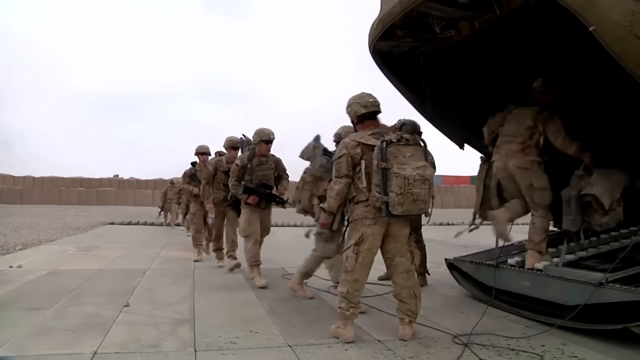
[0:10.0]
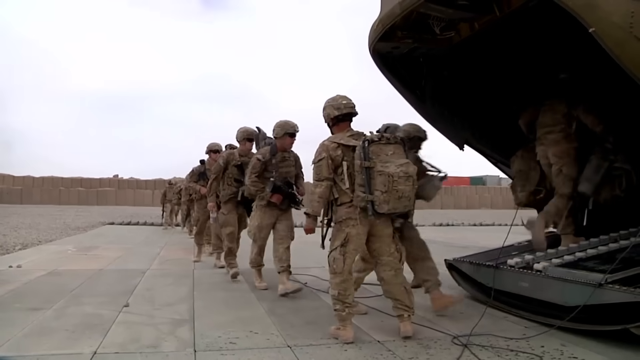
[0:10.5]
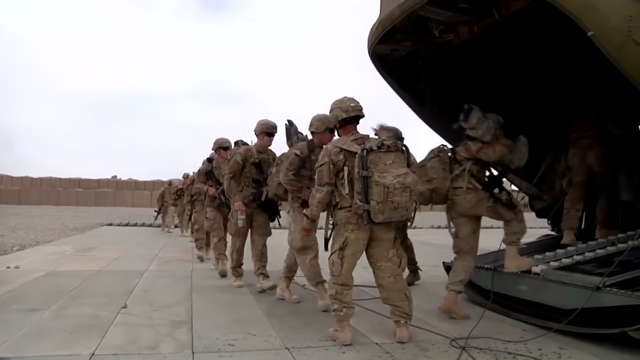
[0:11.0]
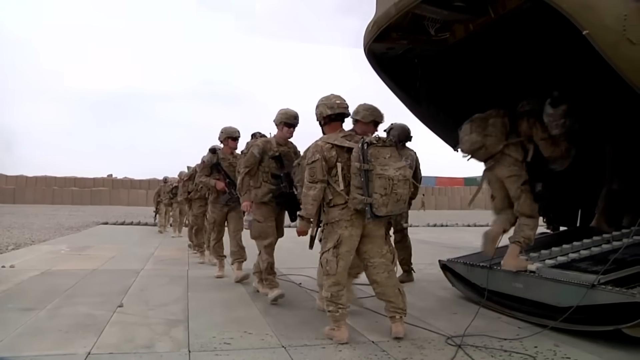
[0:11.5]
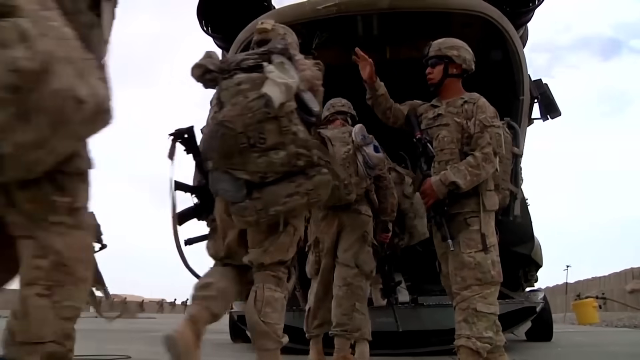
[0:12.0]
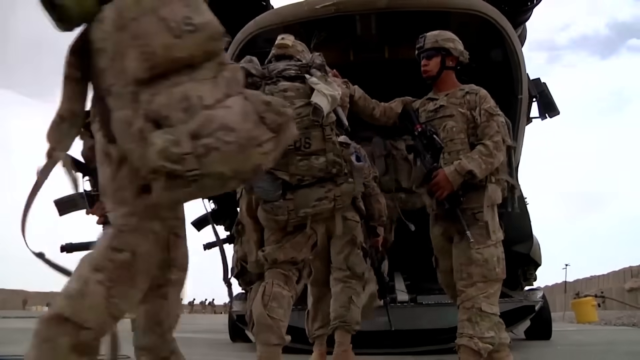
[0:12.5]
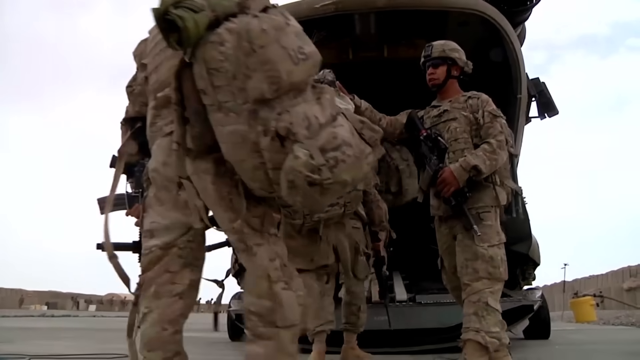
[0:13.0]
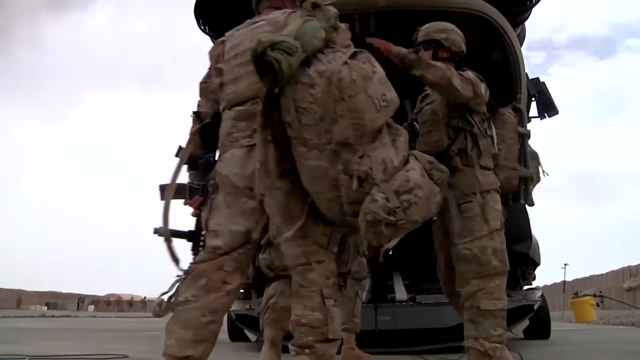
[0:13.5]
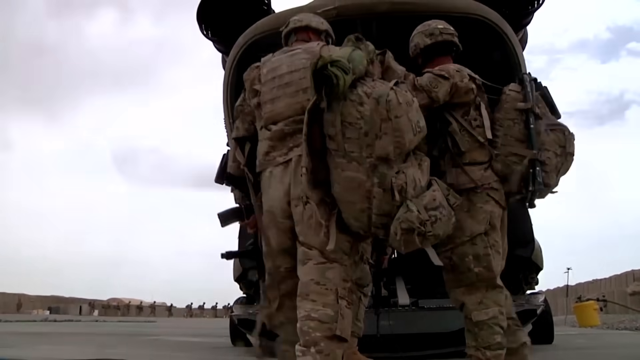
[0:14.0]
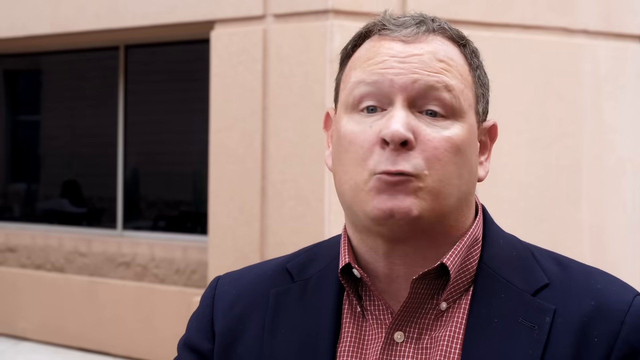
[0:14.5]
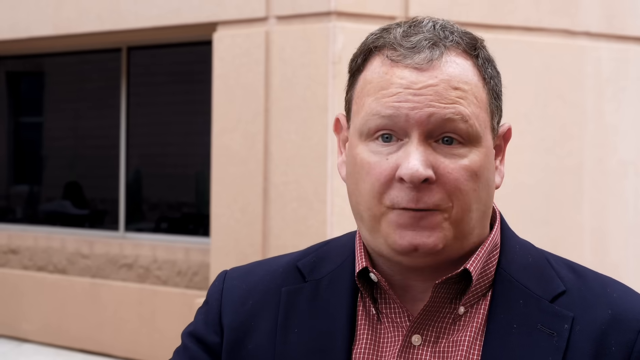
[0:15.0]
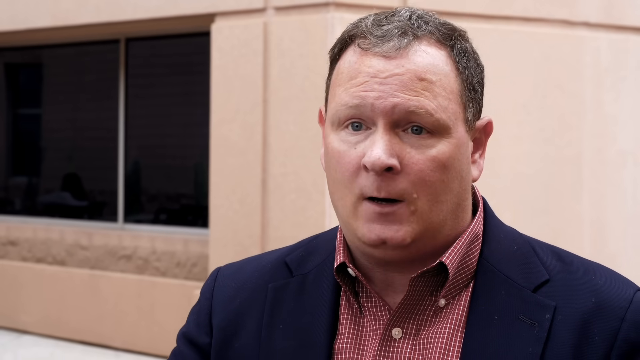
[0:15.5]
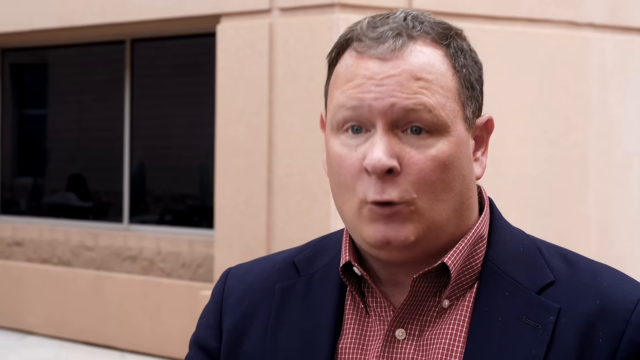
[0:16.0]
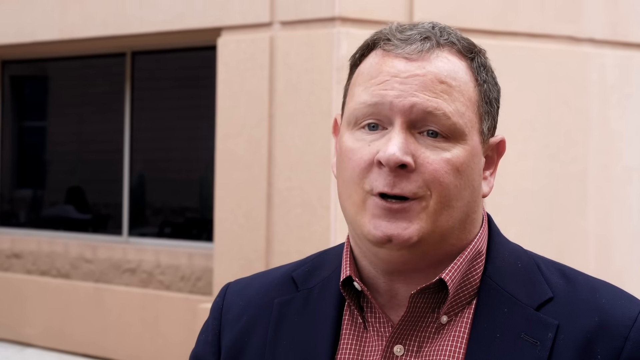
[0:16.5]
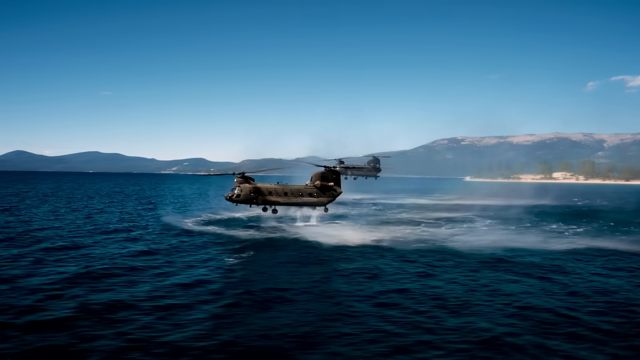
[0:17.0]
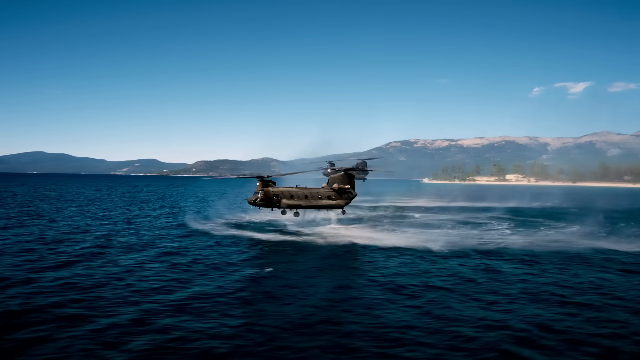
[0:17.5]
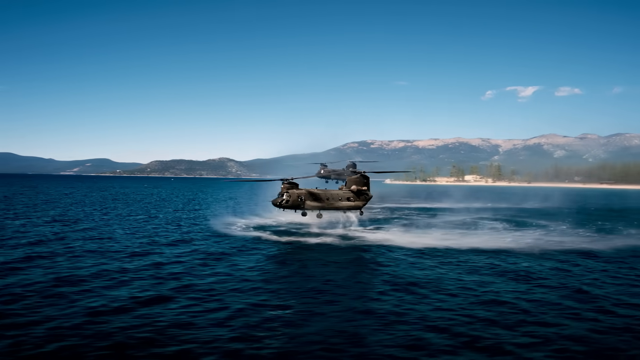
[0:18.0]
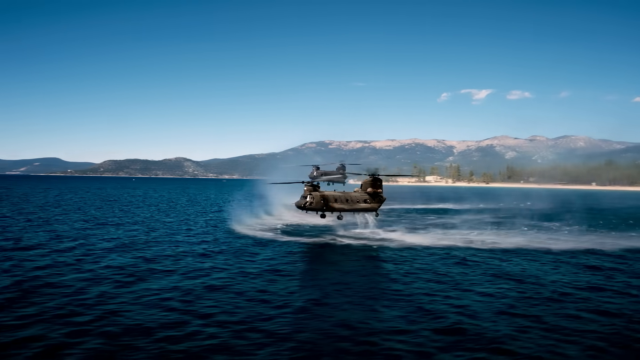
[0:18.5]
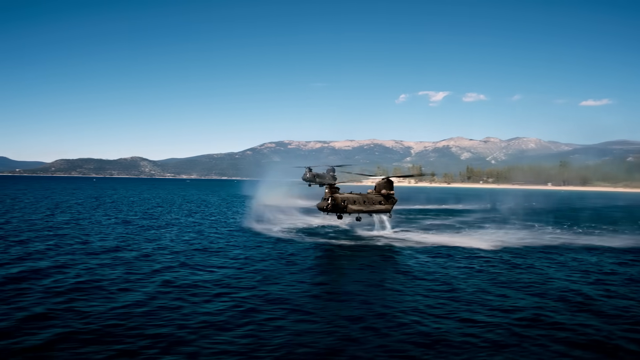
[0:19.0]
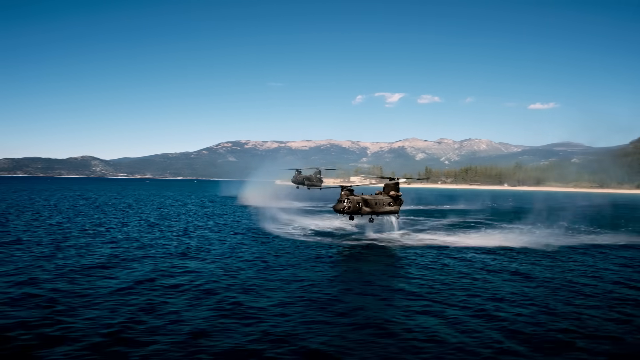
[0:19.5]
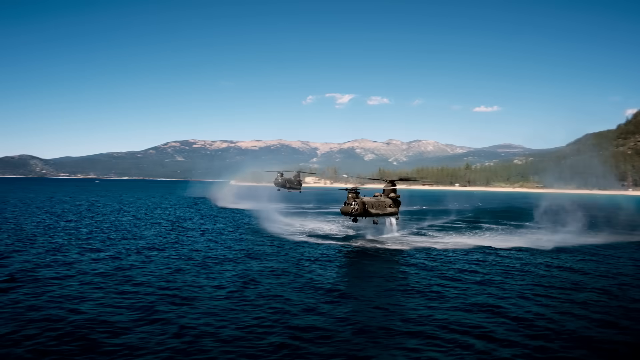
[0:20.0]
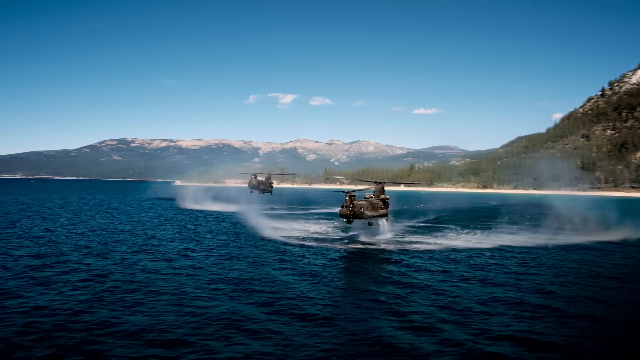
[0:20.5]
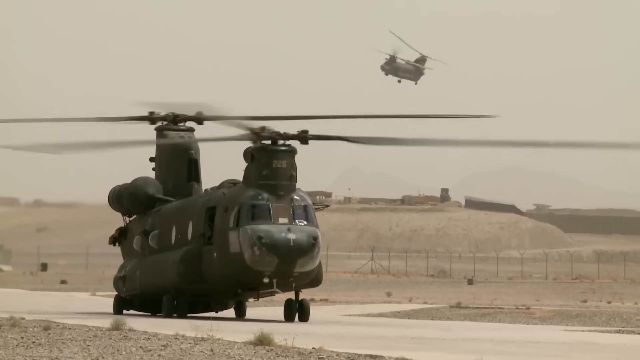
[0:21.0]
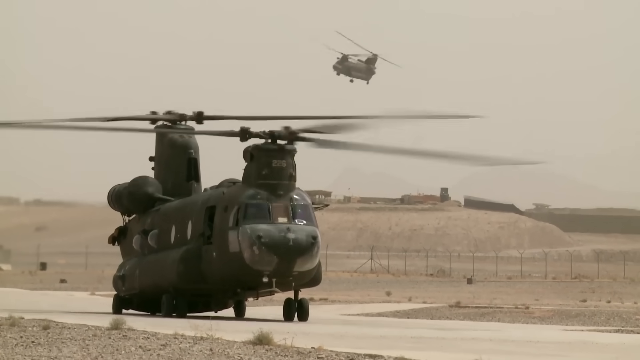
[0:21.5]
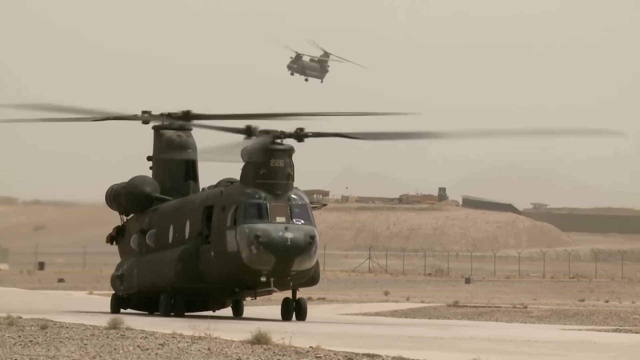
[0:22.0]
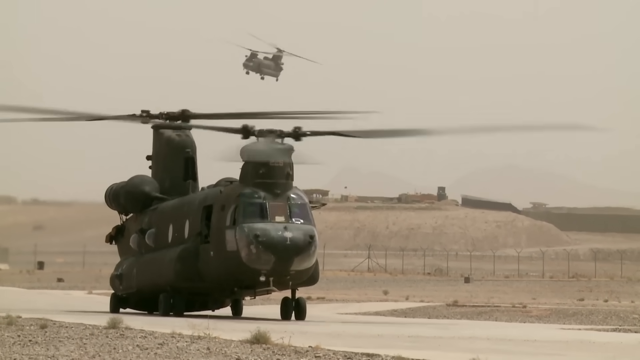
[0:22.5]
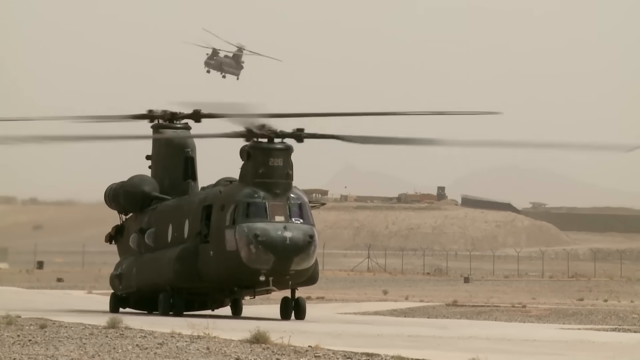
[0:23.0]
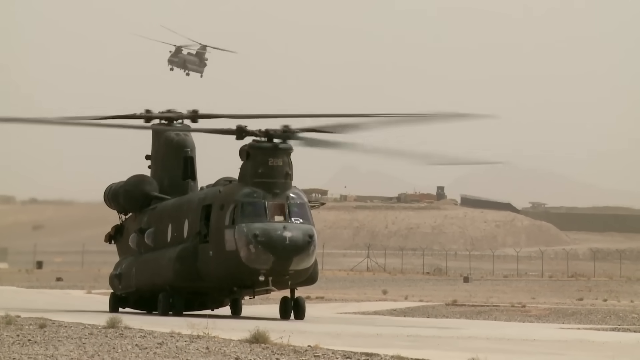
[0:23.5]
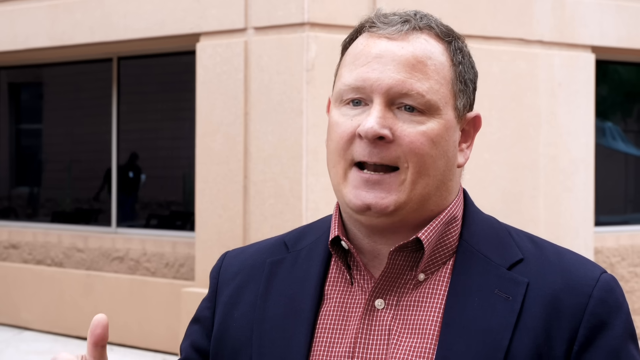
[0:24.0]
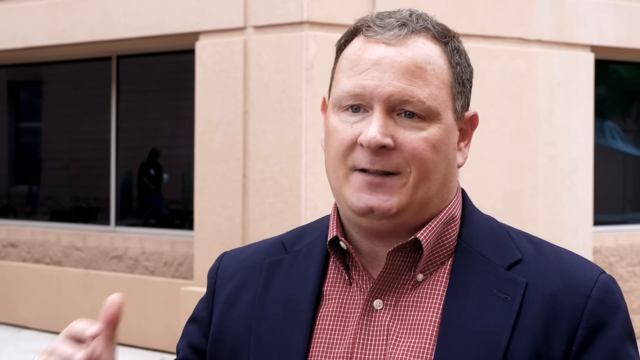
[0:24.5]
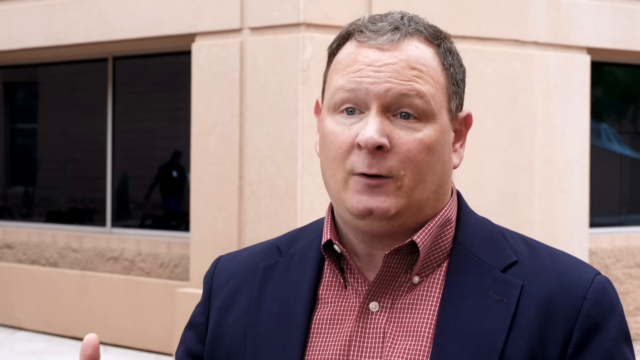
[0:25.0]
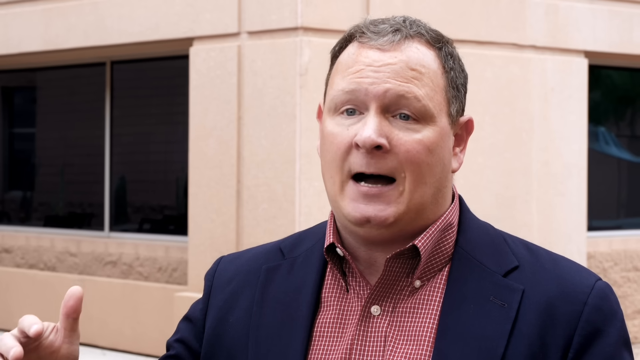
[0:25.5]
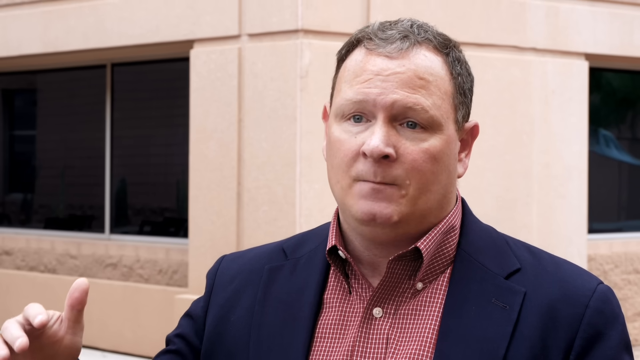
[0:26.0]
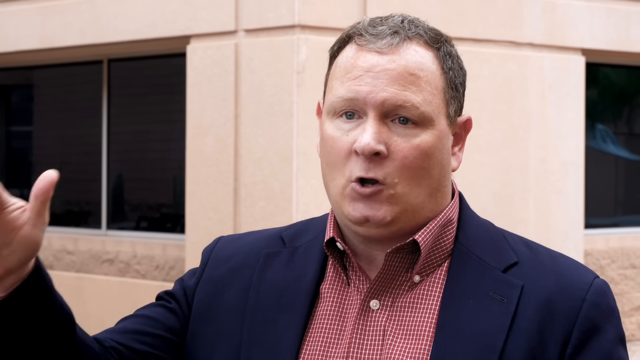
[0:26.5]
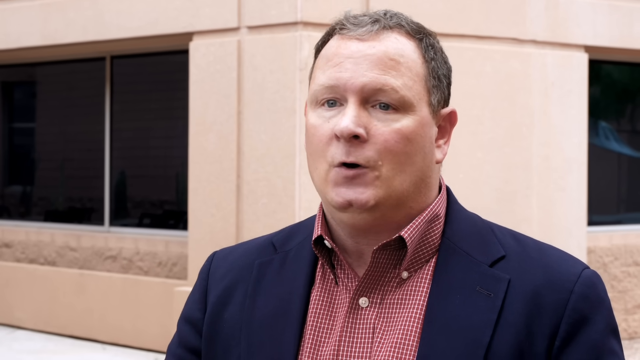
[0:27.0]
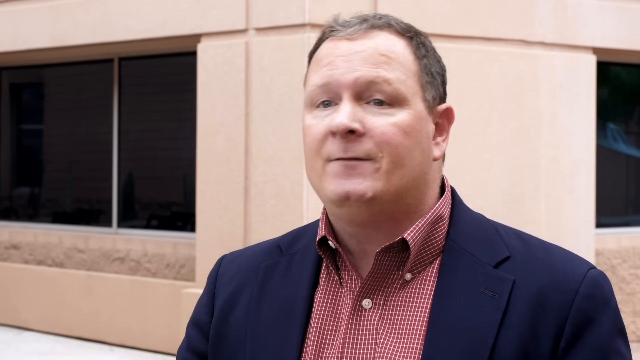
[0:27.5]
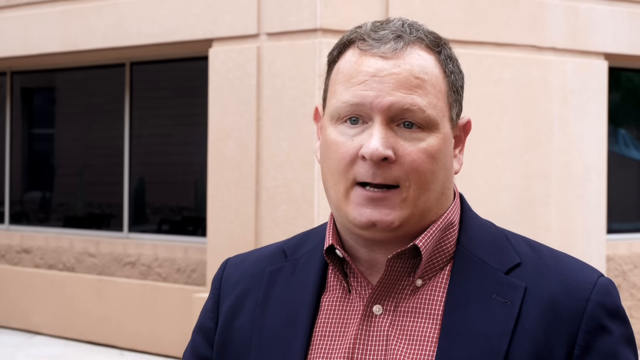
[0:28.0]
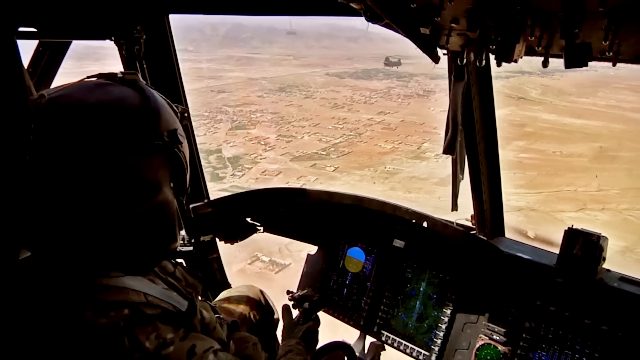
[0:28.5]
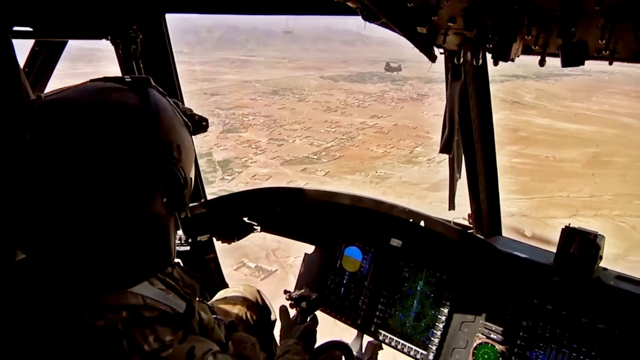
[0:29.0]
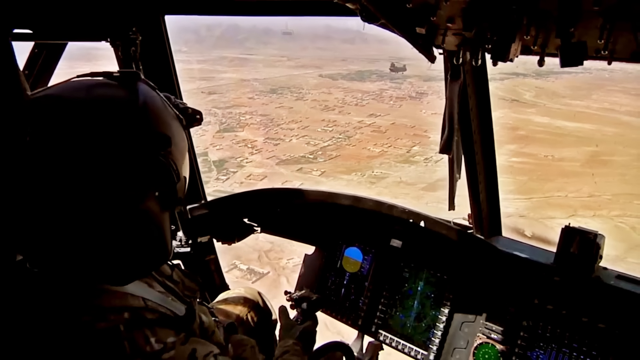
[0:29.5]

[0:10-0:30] Army men dressed in their army outfits, with big backpacks on, board an aircraft. A soldier standing at the entrance to the aircraft puts his hand on the shoulder of each one that goes by. The man speaks again; he is in a suit, not an army outfit. Aircraft hover above water and look like they are dropping water into the water. The man speaks again, wearing a blue suit jacket and a red and white plaid button-down shirt. Inside a cockpit, an army soldier is driving, and the view he sees below looks like all rock, apparently dirt terrain. The soldiers are going to a place that looks desolate and dry, with a lot of cliffs.